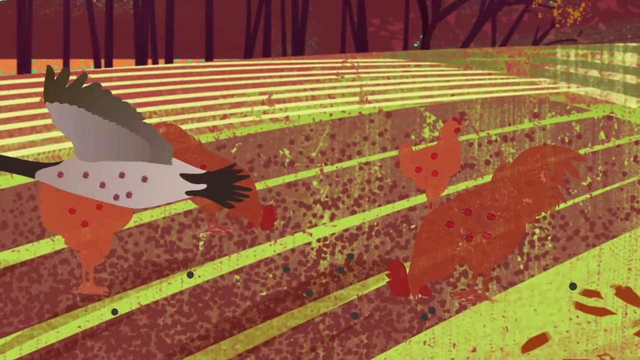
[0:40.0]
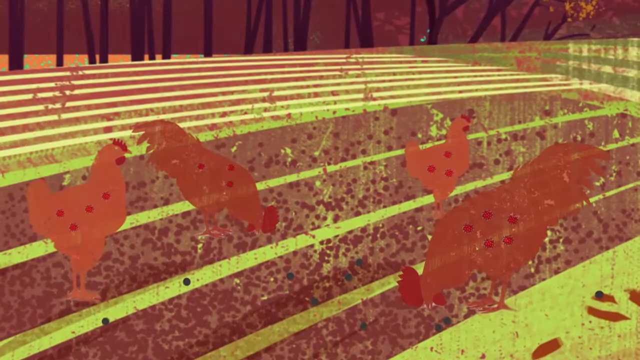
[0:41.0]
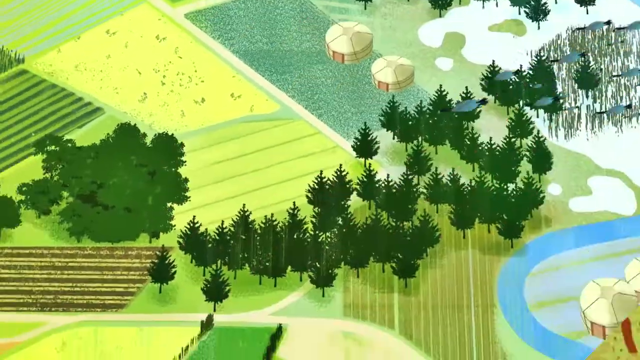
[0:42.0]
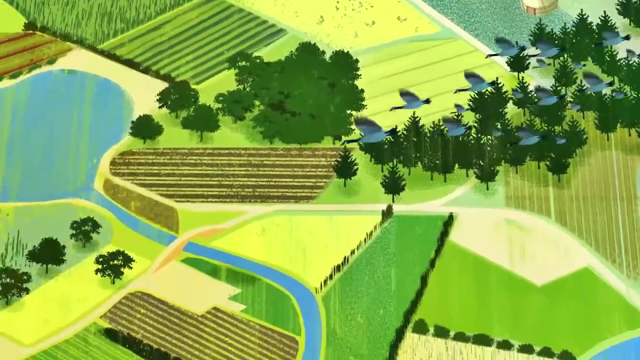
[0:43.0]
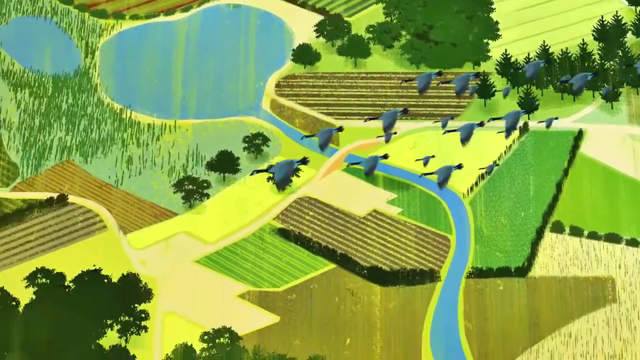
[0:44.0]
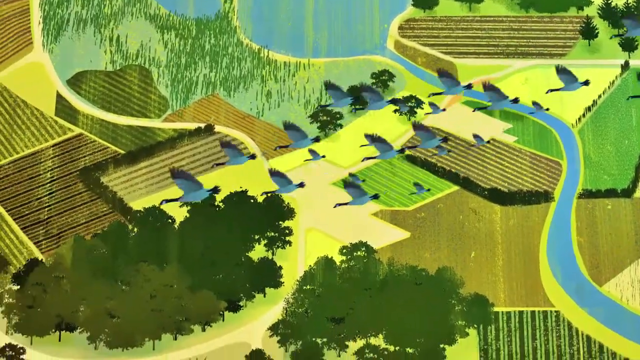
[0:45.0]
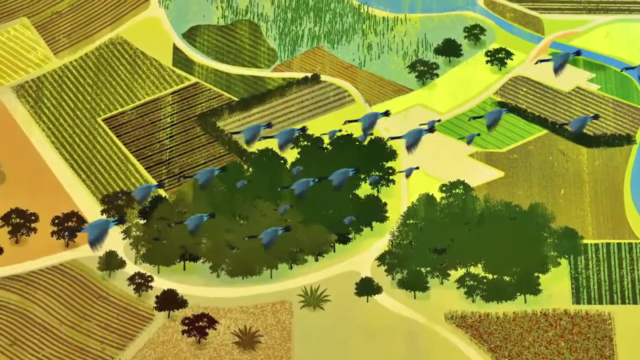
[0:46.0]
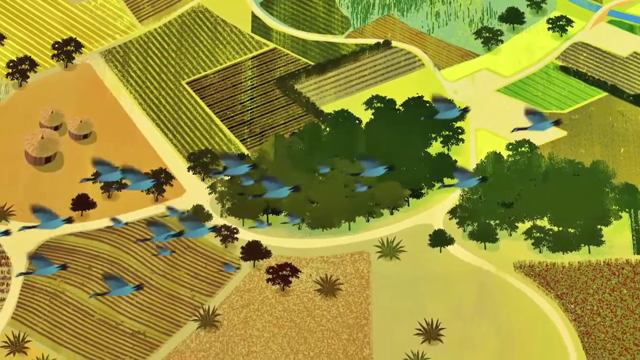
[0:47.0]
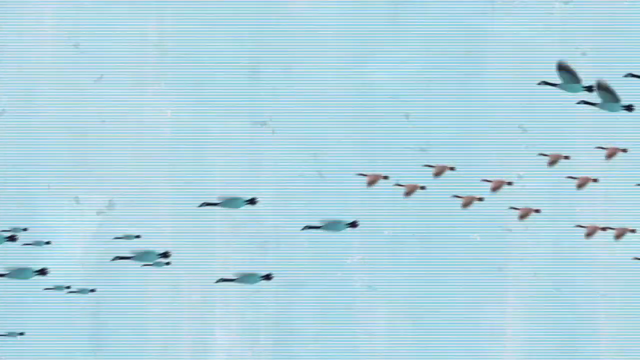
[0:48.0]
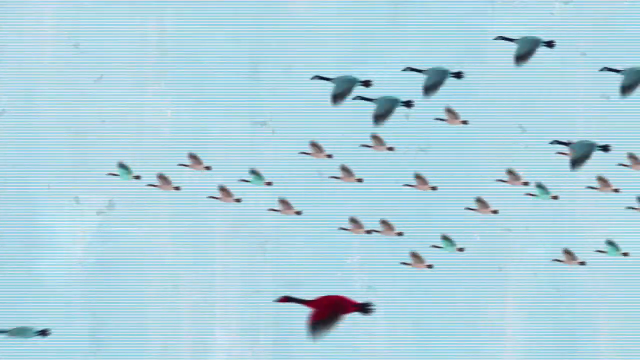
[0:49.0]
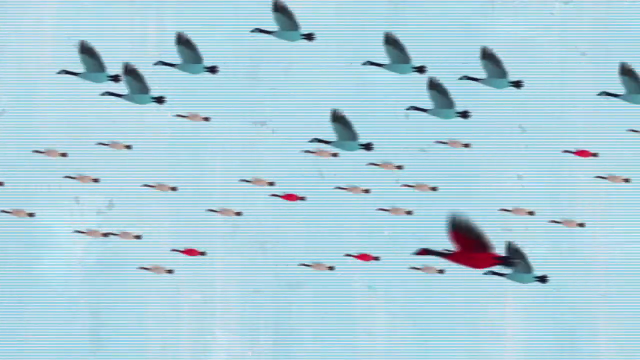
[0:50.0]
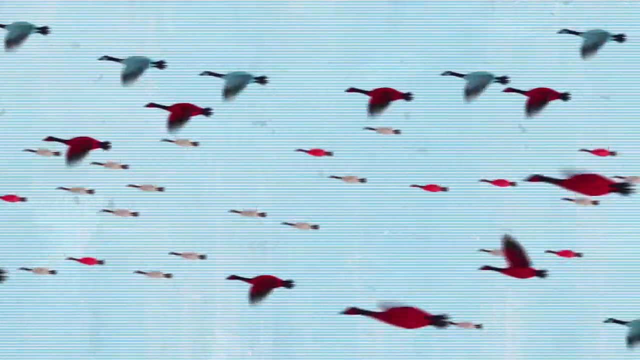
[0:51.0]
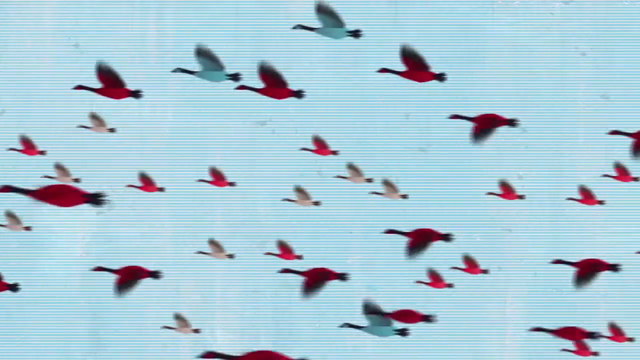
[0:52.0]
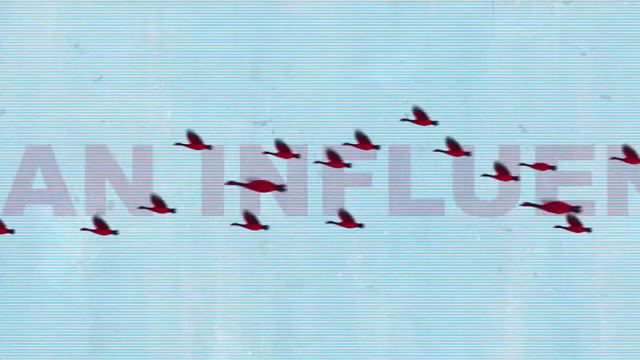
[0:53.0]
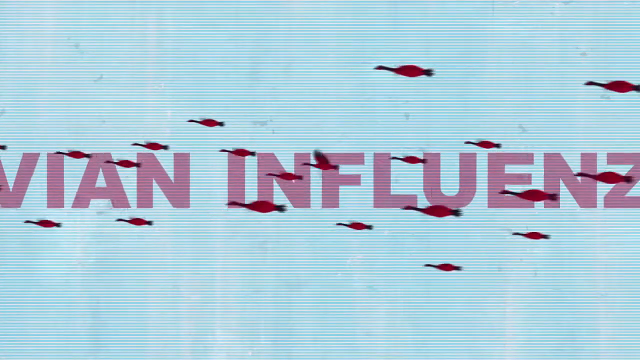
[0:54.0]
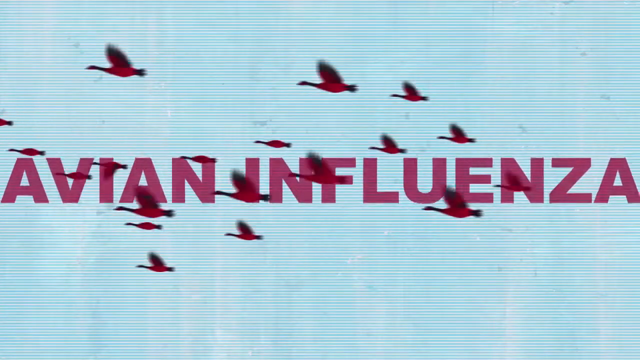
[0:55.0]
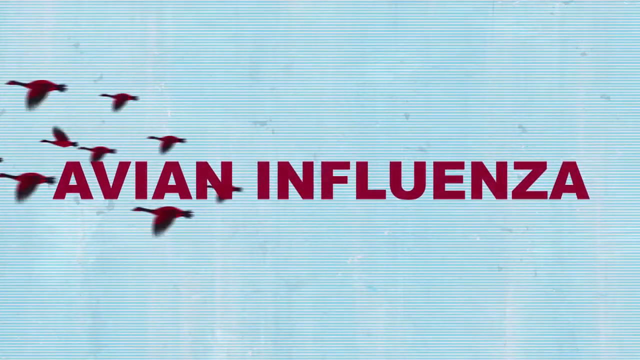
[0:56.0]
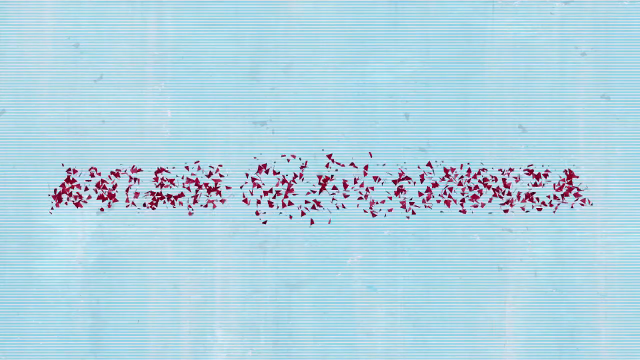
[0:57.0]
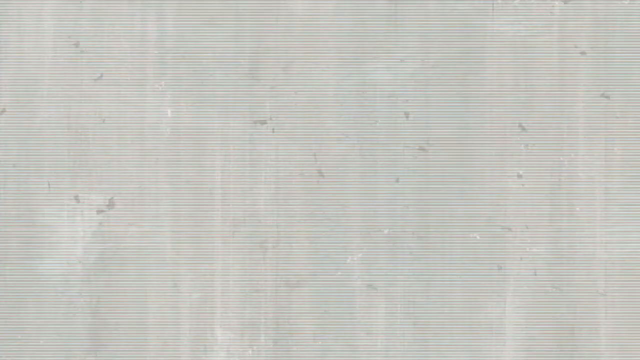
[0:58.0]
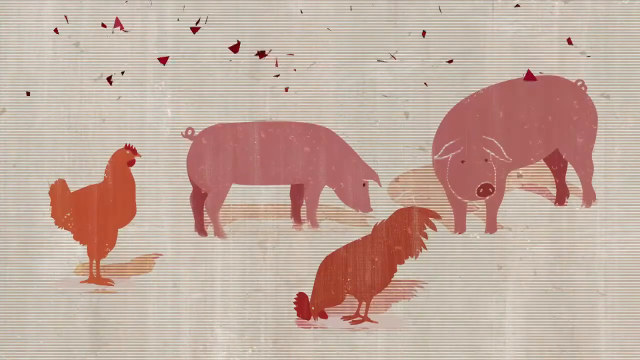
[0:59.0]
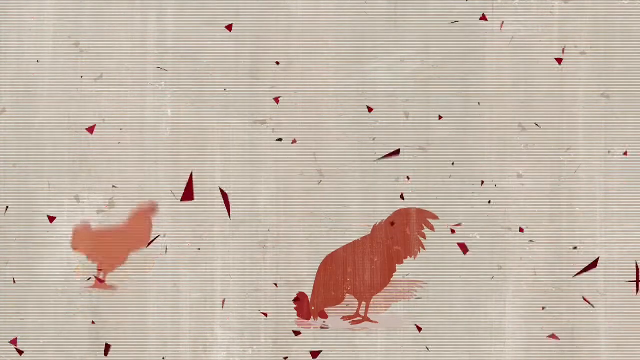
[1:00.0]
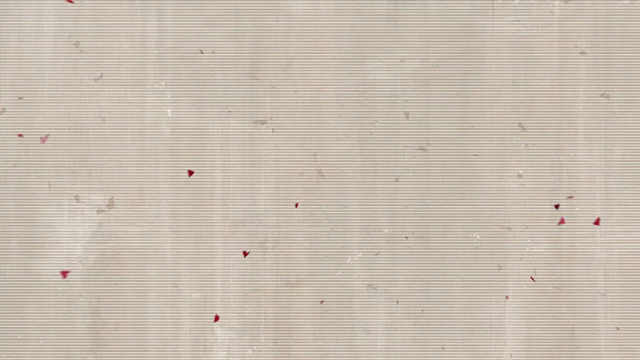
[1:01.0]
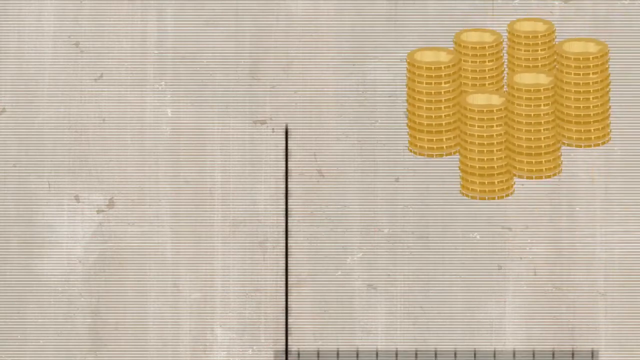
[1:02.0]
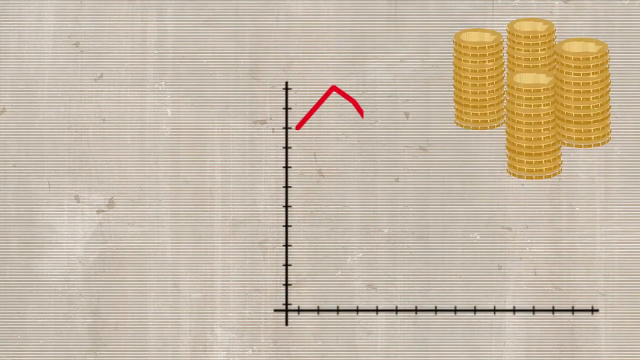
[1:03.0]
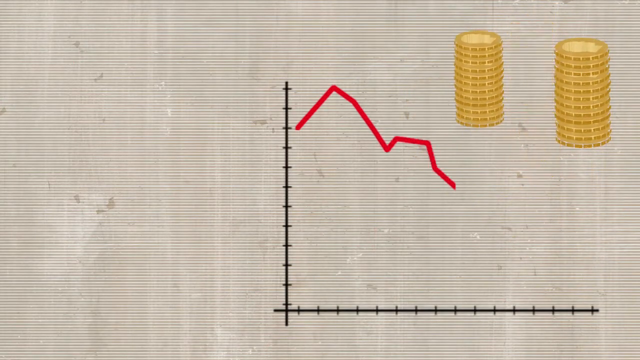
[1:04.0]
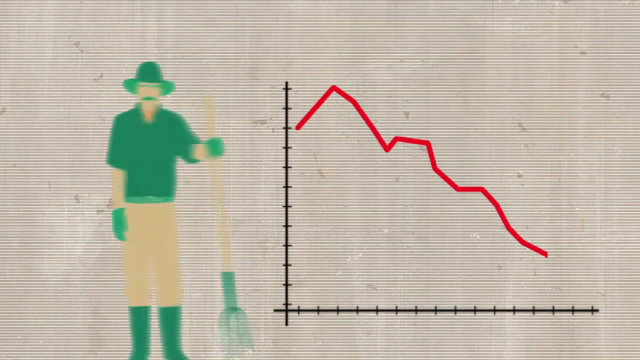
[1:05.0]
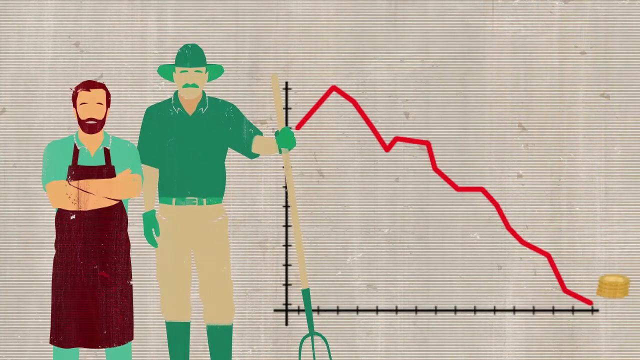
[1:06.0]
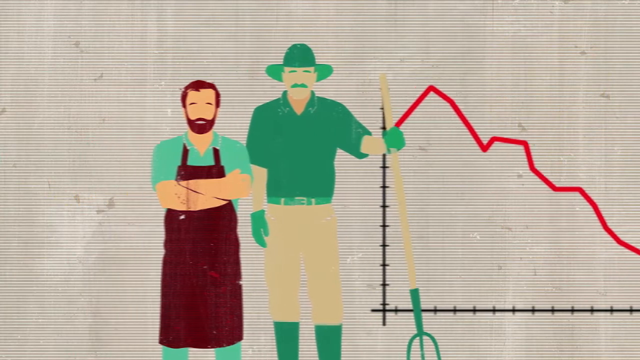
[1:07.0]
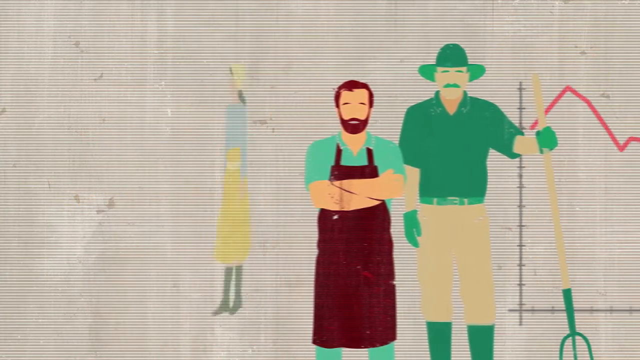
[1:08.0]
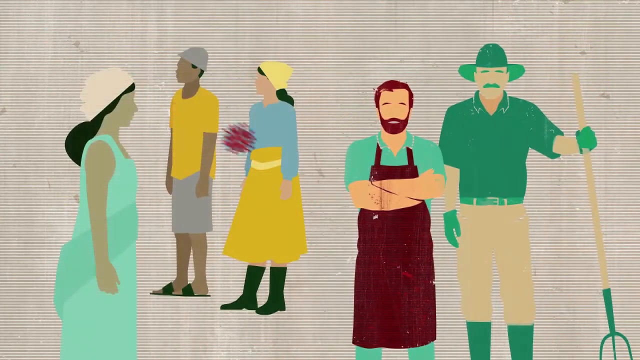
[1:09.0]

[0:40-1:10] A close-up shows the roosters, which appear to be see-through, with the geese droppings behind them. The geese are then shown flying, this time appearing bluish with black necks and black tails. An almost straight-down view, like one from an airplane, shows green trees, farmland with stripes in different shades of green, and a blue river going into a pond as the birds continue to fly. Blue, red and brownish geese then fly by together, a great many birds. The words "avian influenza" appear in red as the red geese fly by. The words break apart as if they shatter and fall onto farm animals as the scene transitions, landing on two pigs and two roosters that are grazing. A chart comes up with three stacks of gold coins and what appears to be a line graph with black hash marks along the x and y axes and a red line trending down from left to right. Suddenly two men appear: one wears a green shirt and a green hat like a farmer's hat, and the other looks like a blacksmith, with a brown coat on, his arms crossed, and a beard.